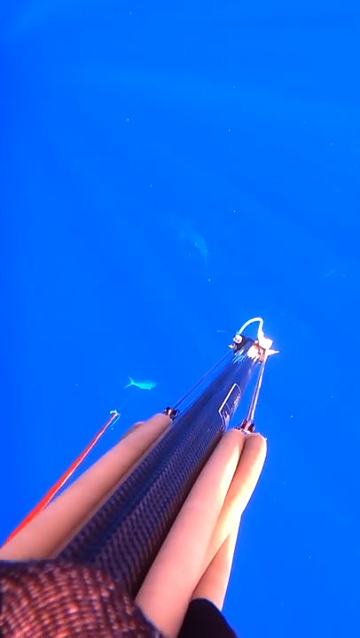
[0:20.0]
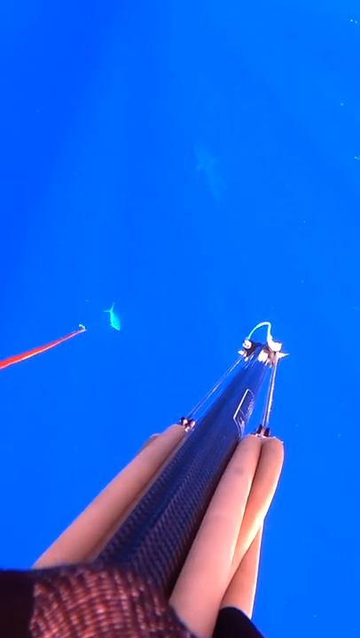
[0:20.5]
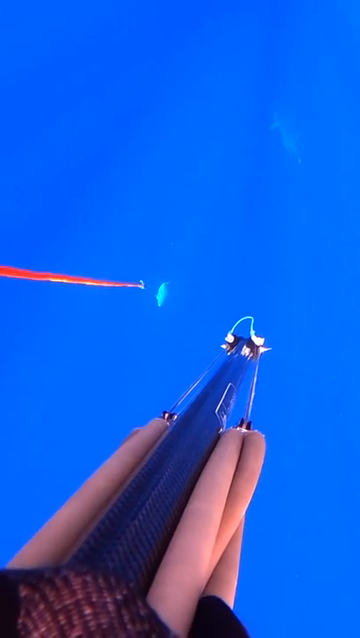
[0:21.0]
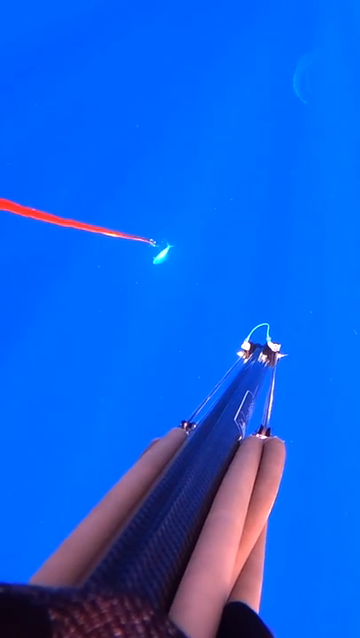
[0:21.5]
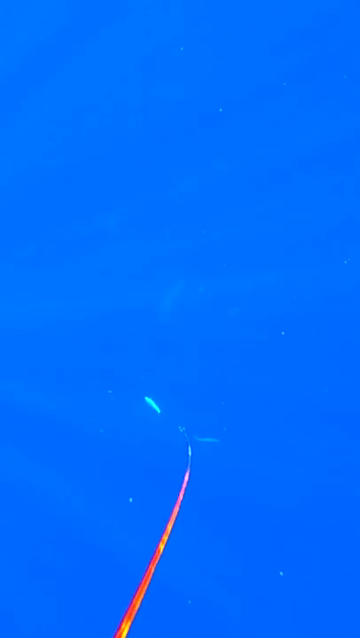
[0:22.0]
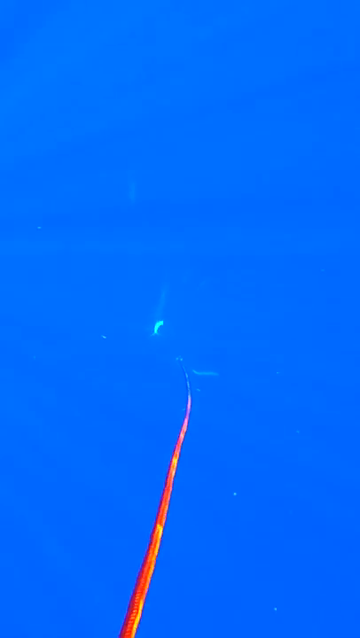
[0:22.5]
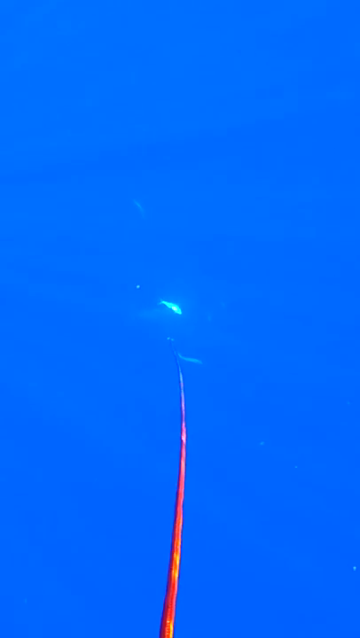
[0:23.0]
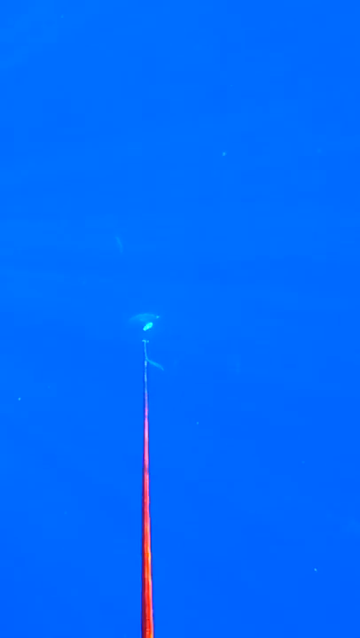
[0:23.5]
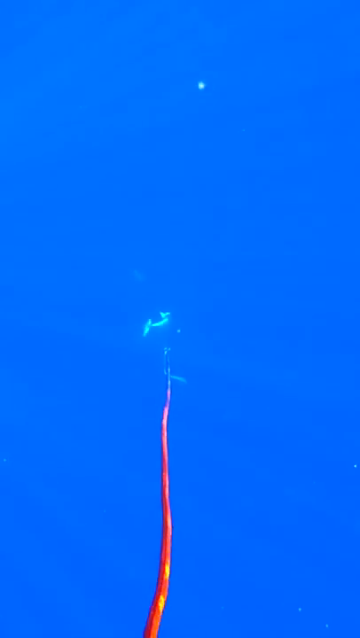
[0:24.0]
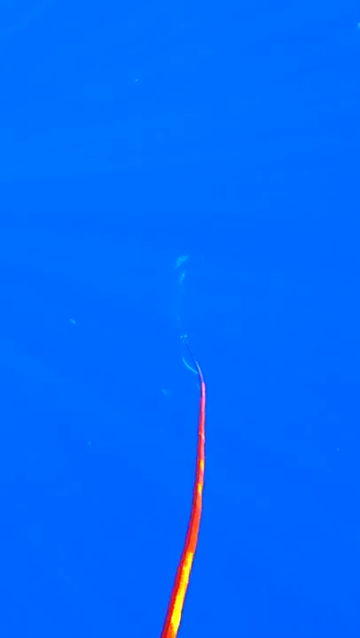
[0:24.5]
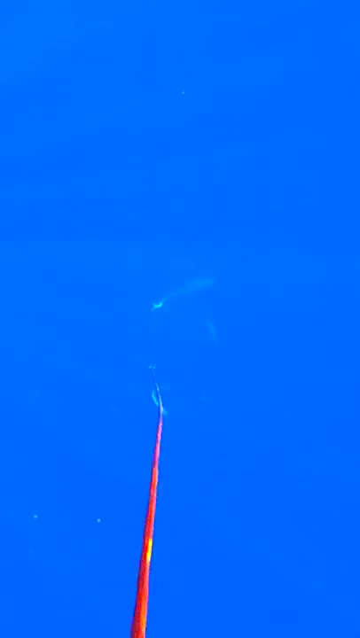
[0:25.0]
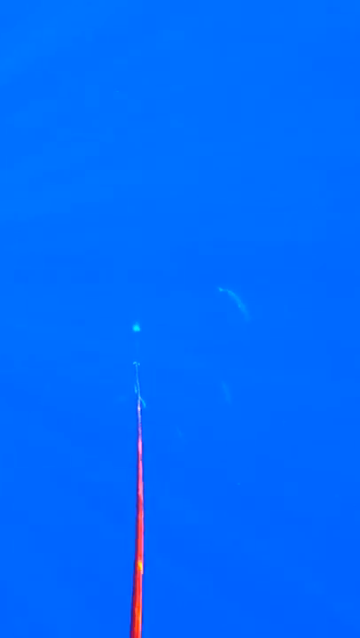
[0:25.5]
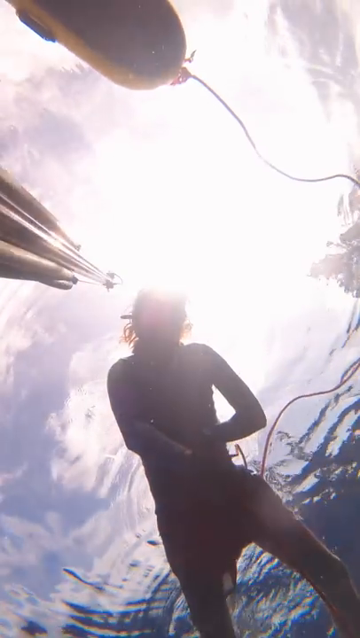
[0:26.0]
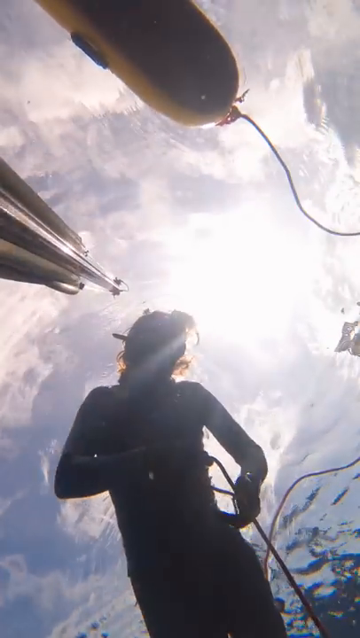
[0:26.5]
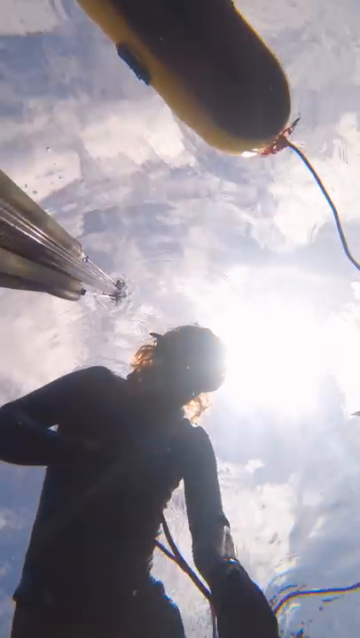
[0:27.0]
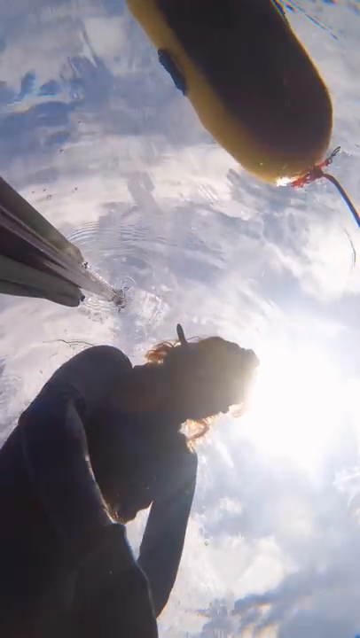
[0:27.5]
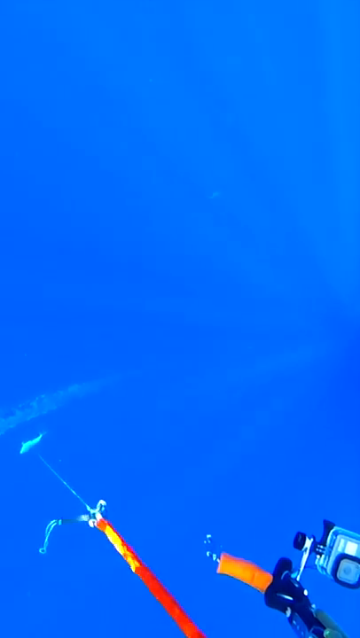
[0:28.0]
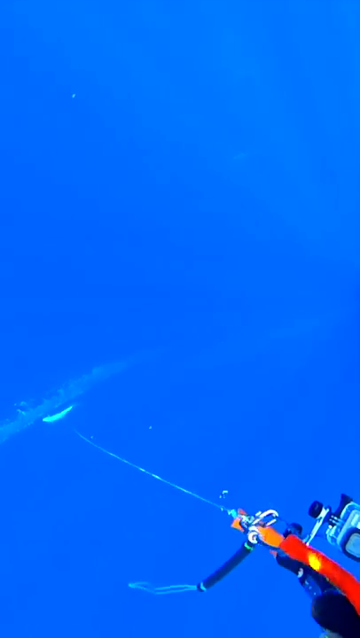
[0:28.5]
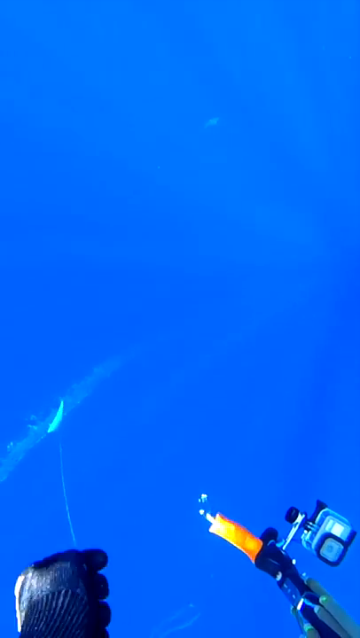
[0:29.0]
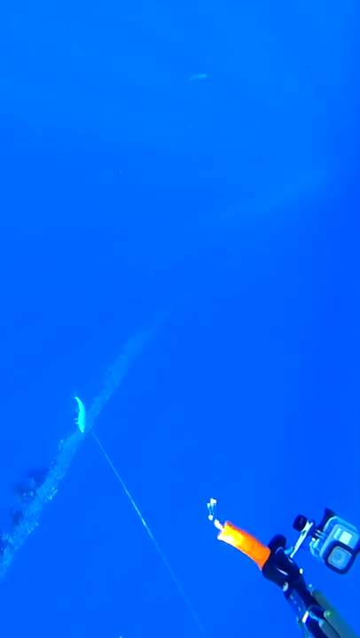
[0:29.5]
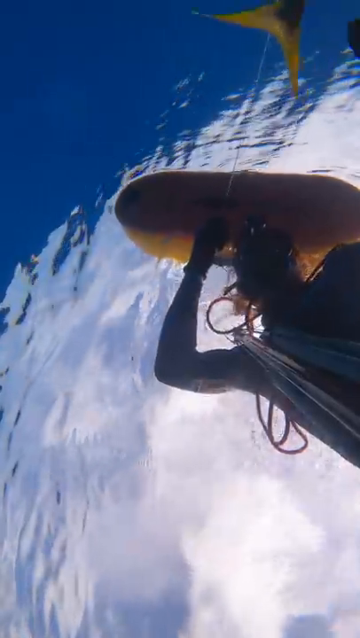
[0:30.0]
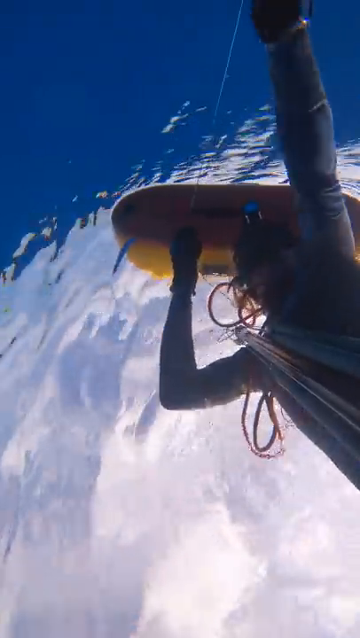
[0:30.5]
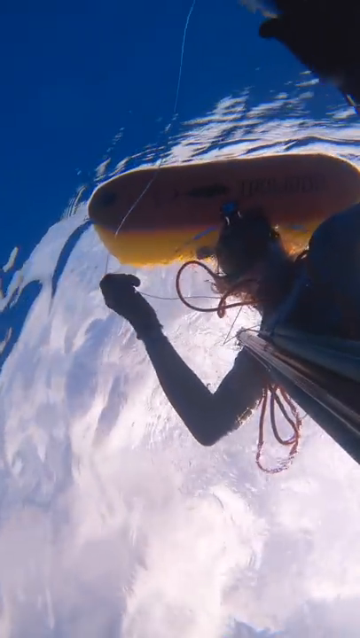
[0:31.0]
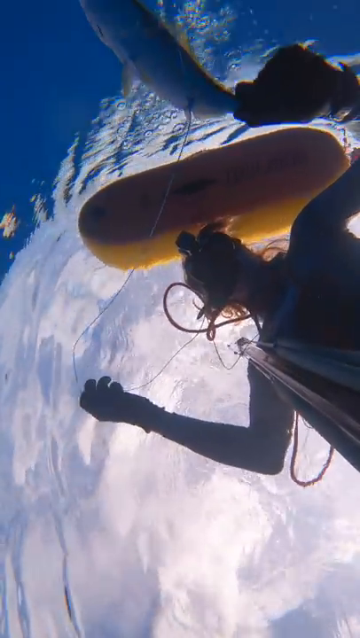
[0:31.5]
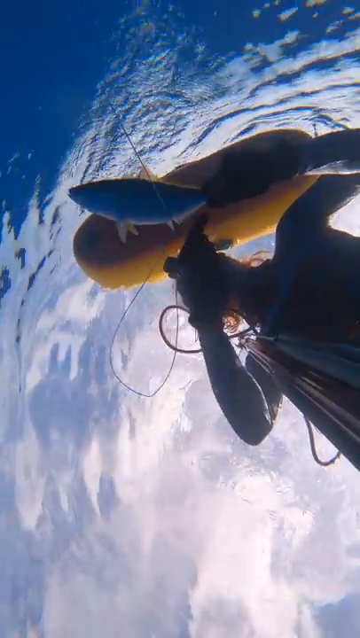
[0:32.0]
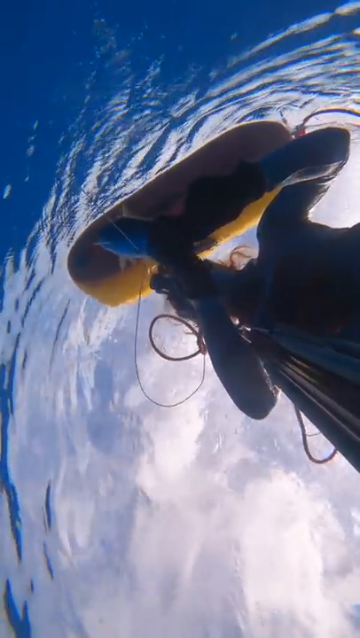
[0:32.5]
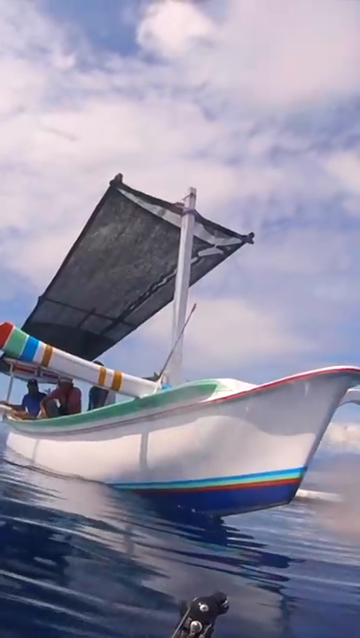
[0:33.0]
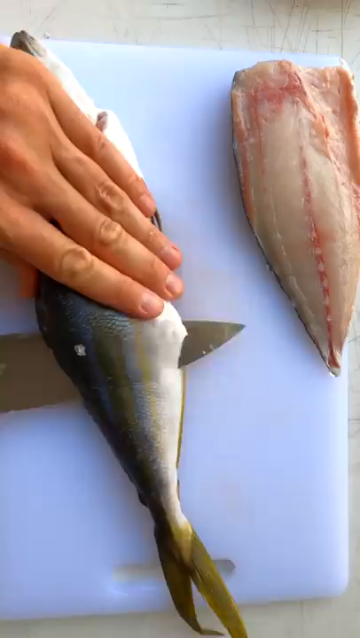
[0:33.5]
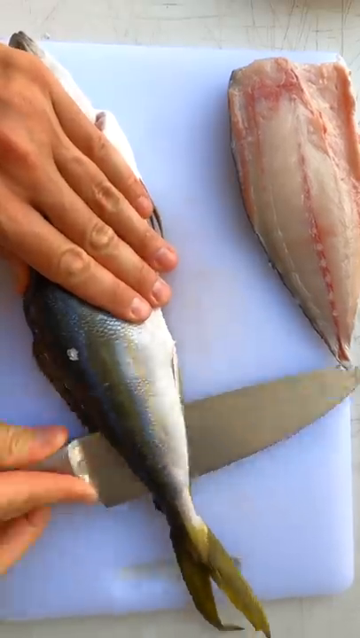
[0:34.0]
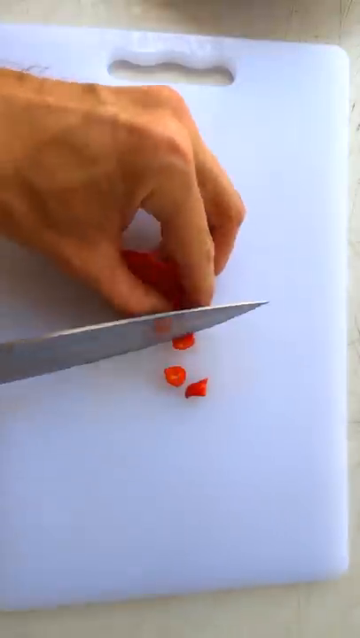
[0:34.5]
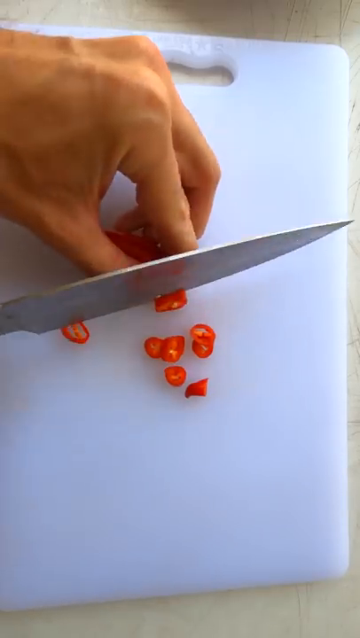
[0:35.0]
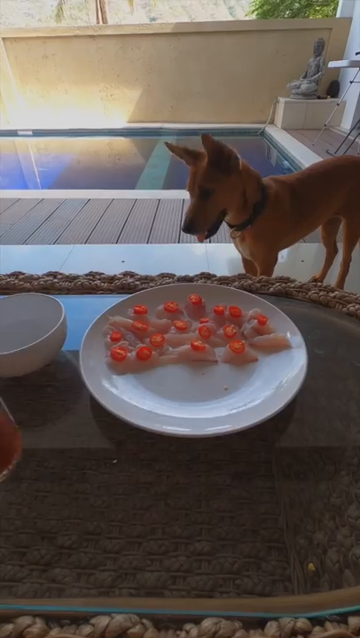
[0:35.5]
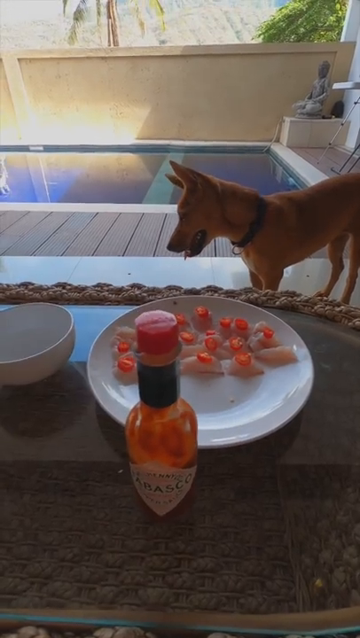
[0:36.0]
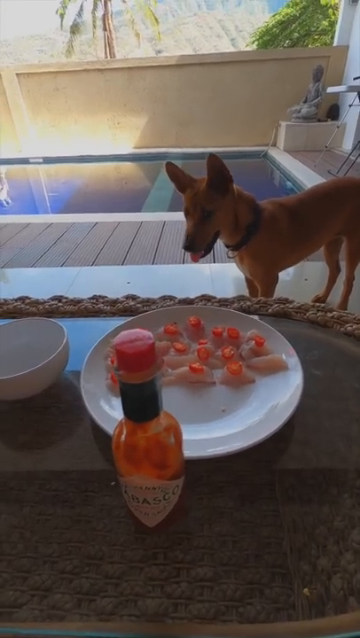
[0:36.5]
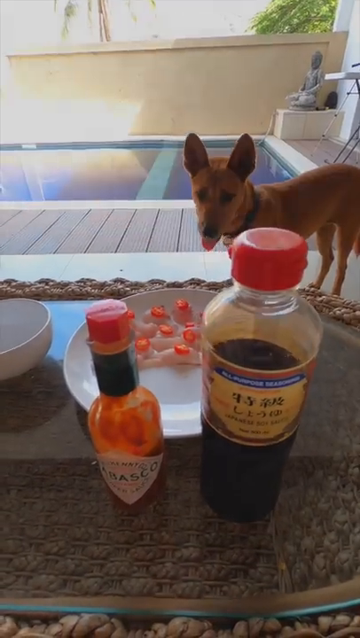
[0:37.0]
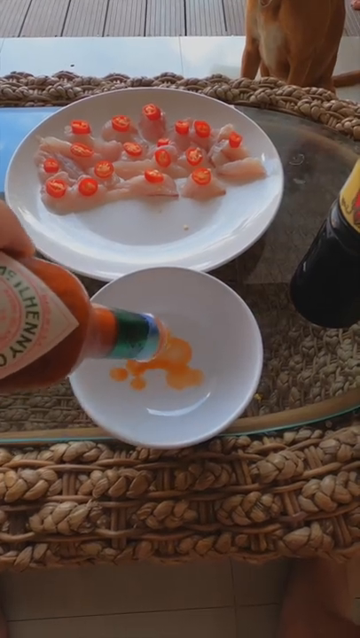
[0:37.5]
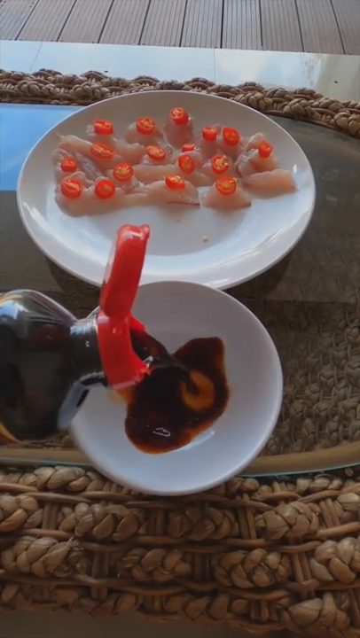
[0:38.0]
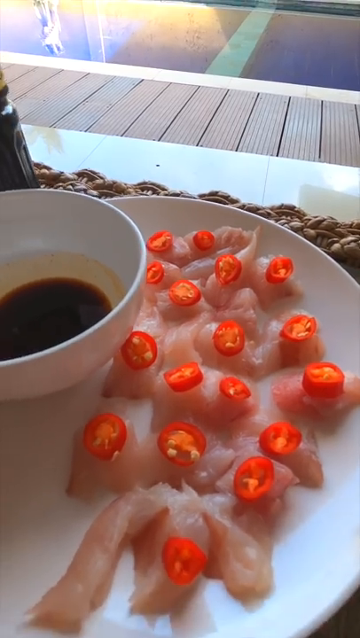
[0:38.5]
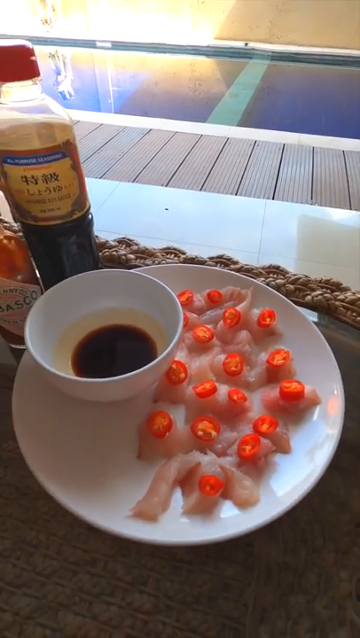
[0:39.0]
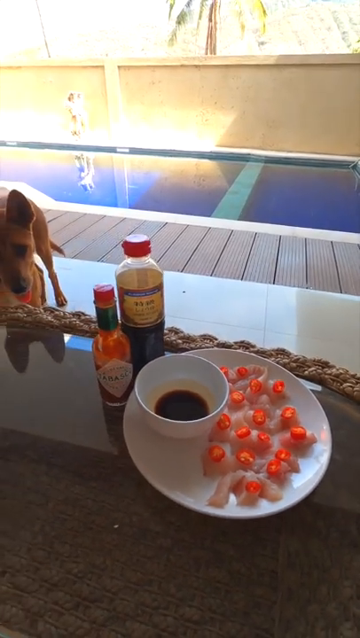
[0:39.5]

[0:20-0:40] A red line is in some water in what seems to be underwater footage. A person pulls a fishing line and a fish. The fish is then cut up, maybe to make sashimi, and there is soy sauce in a bowl with little chunks of fish on a white plate. There are many deep blue shots below the water and also looking up out of the water, along with a small white sailboat. The line on the speargun has a red coating on part of it and then is bare fishing line, and some kind of buoy is visible. The fish is sliced and soy sauce is poured. There seem to be palm trees and a balcony in the background. The person appears to be a woman wearing black gloves and a long-sleeved wetsuit. A dog is in the background as the sashimi is prepared, maybe with some chili.